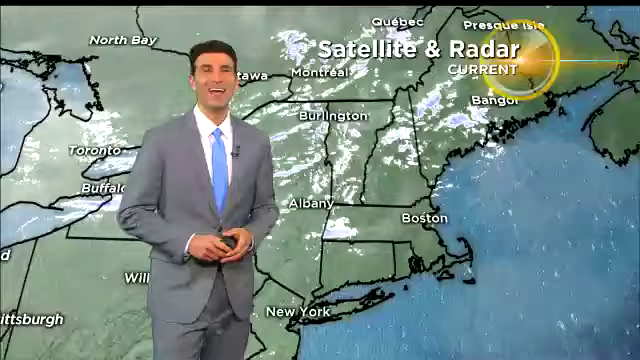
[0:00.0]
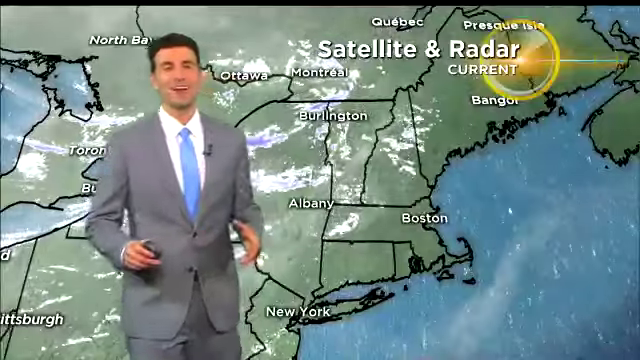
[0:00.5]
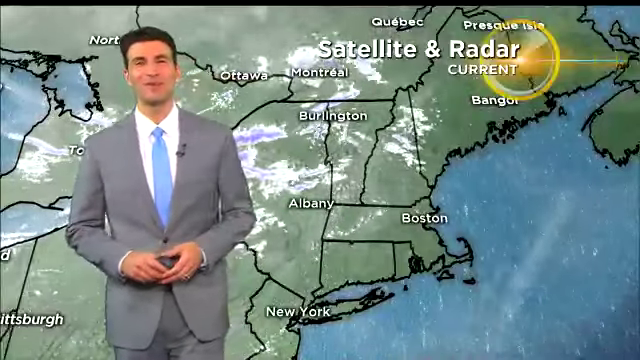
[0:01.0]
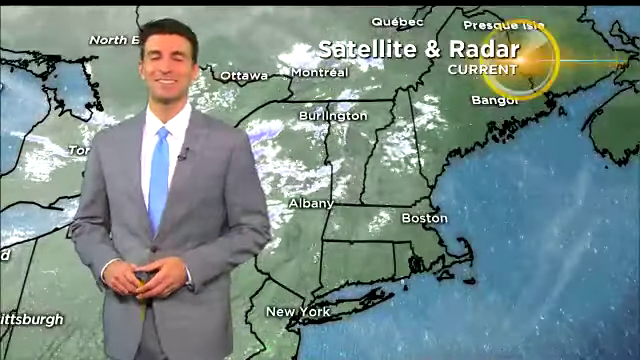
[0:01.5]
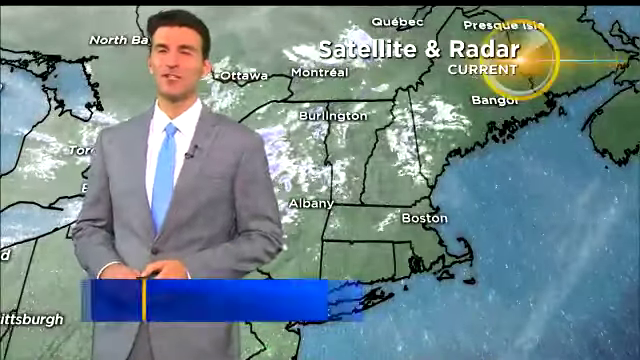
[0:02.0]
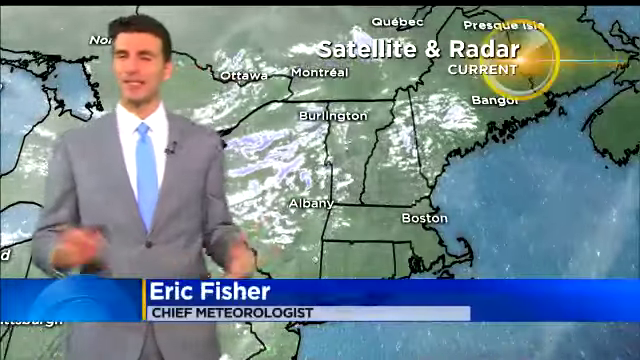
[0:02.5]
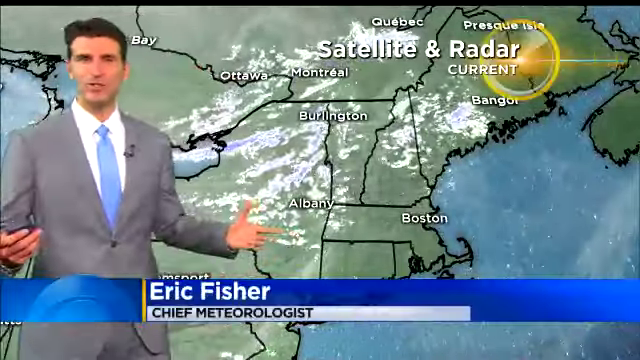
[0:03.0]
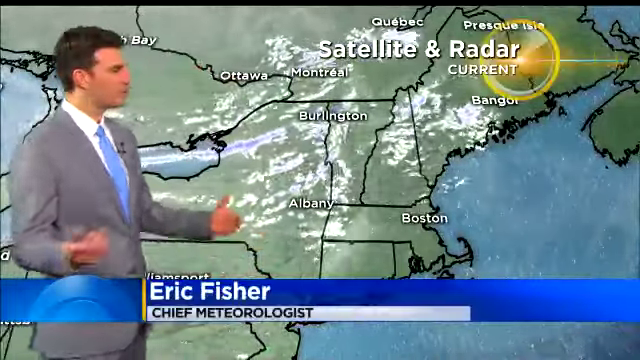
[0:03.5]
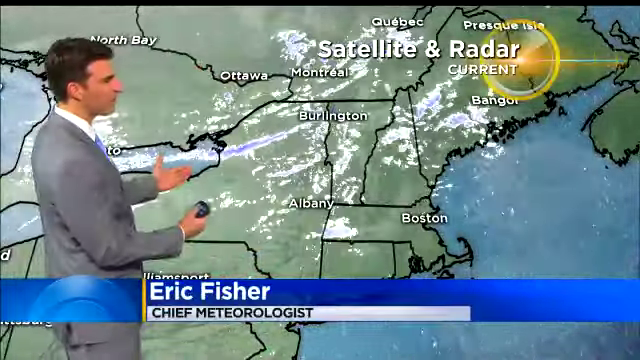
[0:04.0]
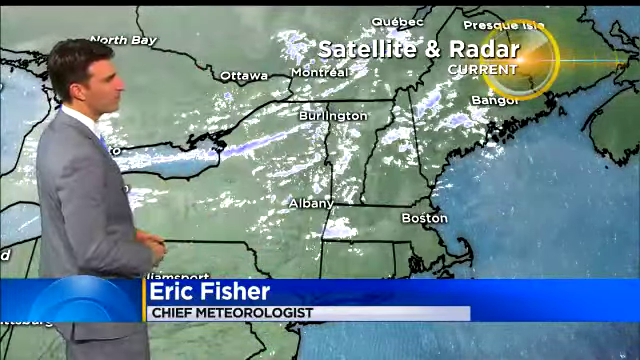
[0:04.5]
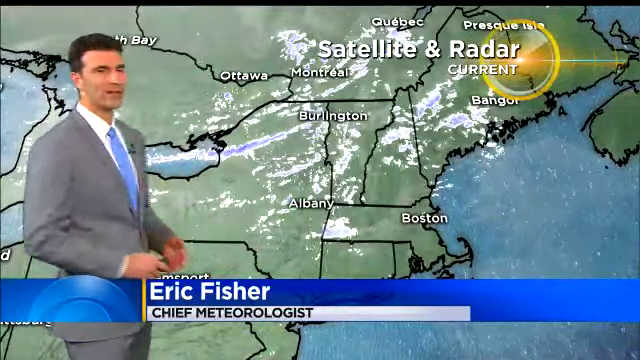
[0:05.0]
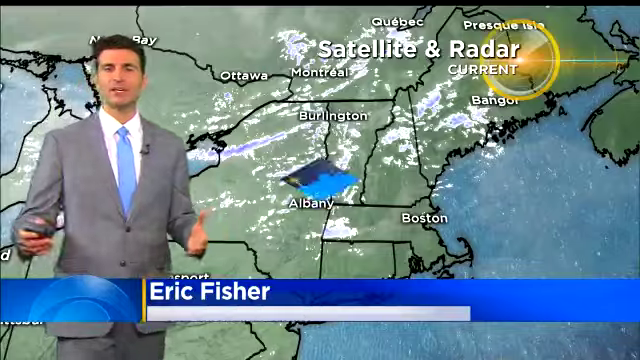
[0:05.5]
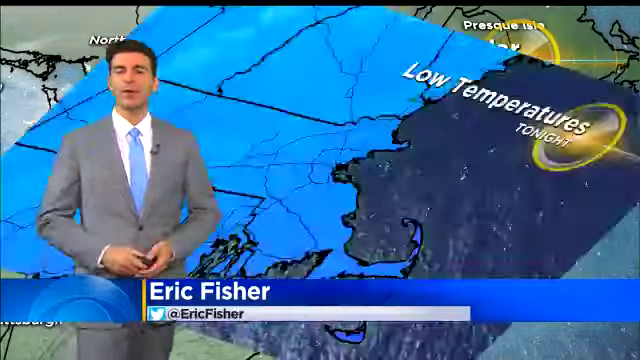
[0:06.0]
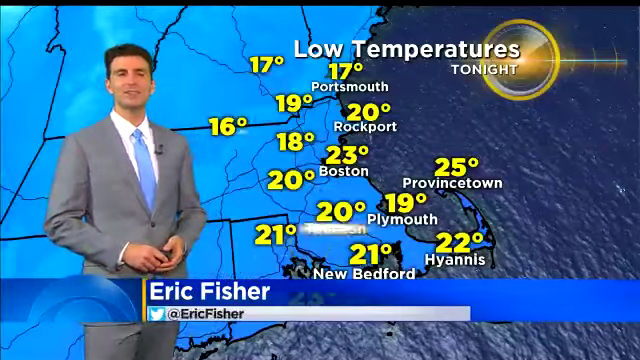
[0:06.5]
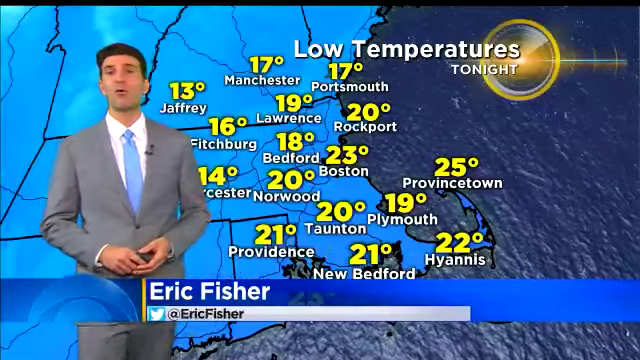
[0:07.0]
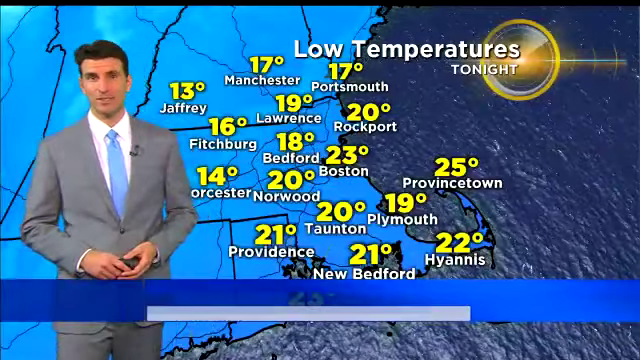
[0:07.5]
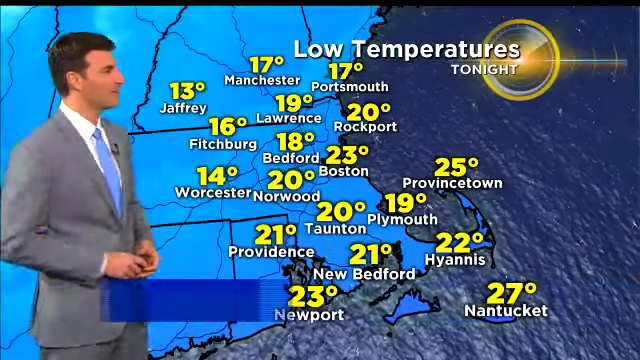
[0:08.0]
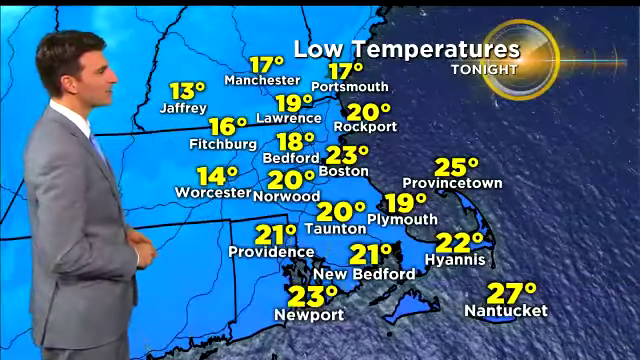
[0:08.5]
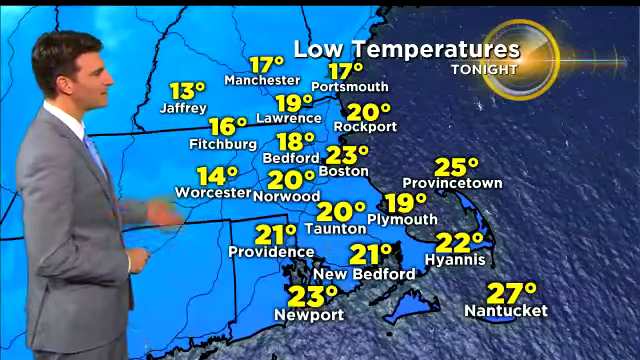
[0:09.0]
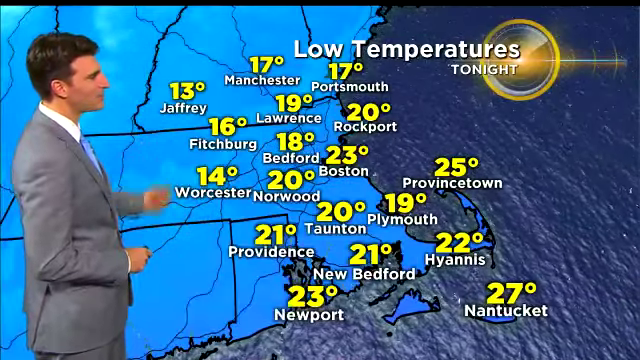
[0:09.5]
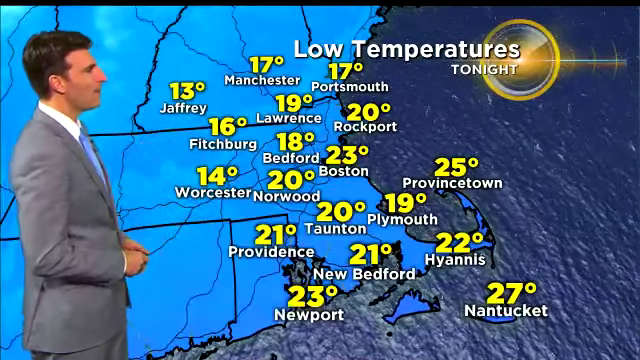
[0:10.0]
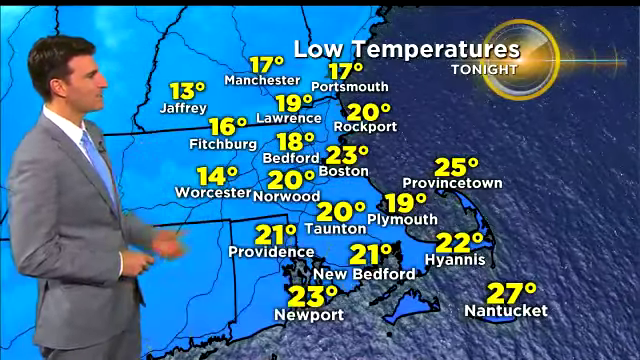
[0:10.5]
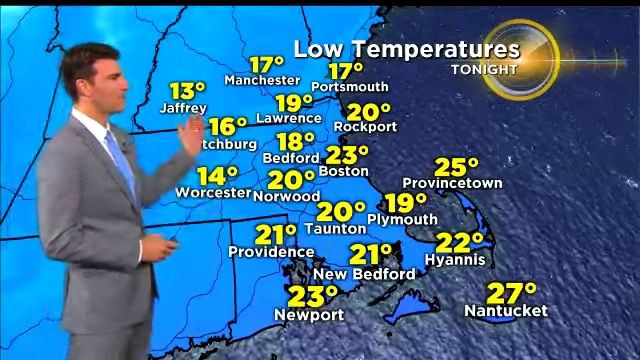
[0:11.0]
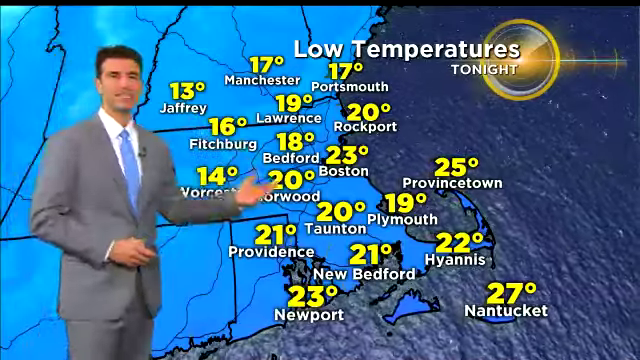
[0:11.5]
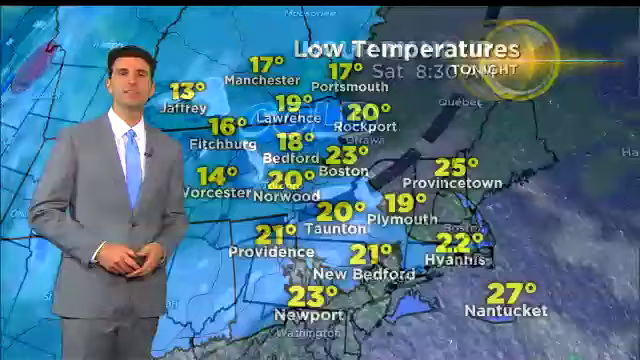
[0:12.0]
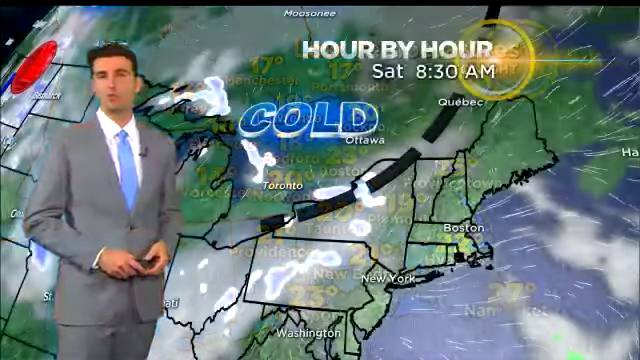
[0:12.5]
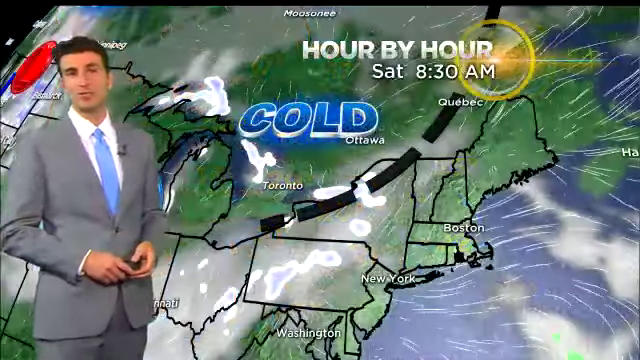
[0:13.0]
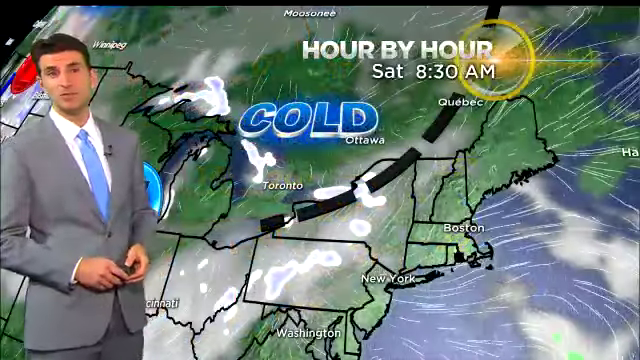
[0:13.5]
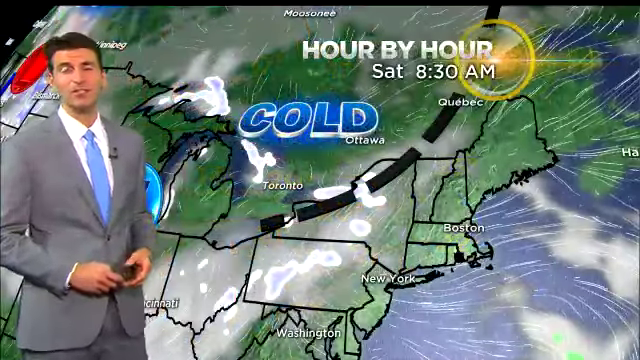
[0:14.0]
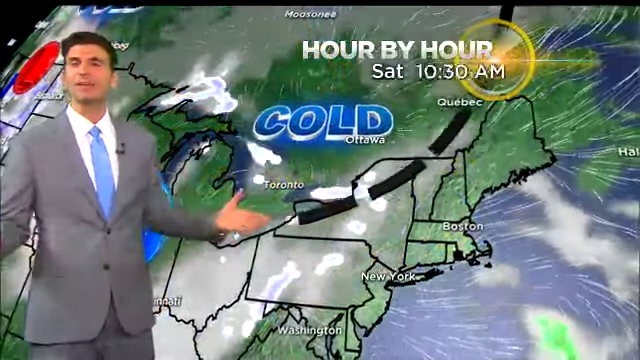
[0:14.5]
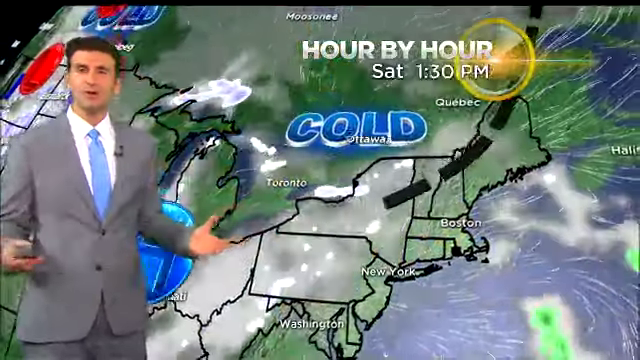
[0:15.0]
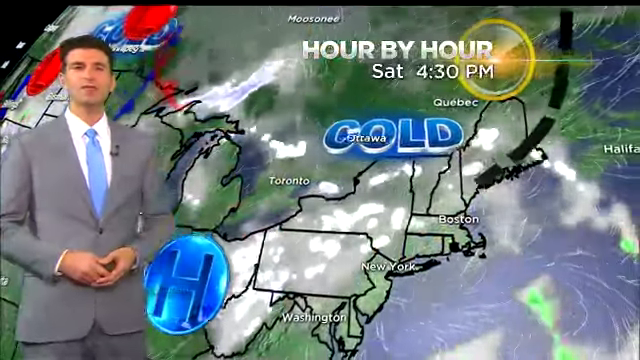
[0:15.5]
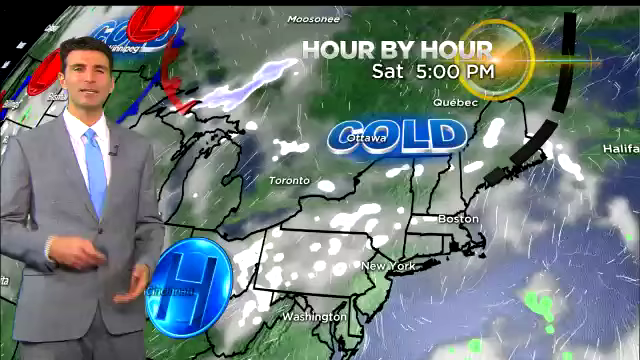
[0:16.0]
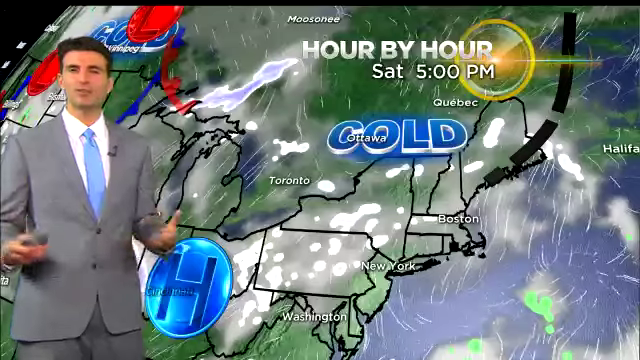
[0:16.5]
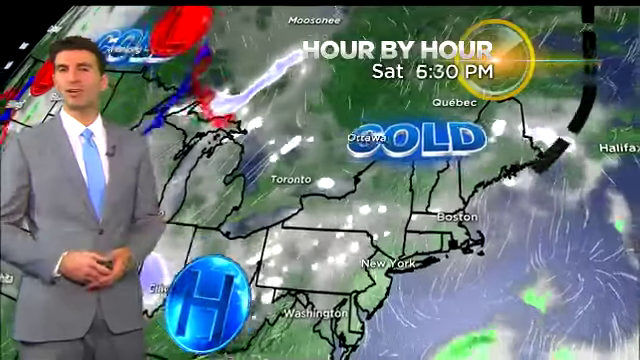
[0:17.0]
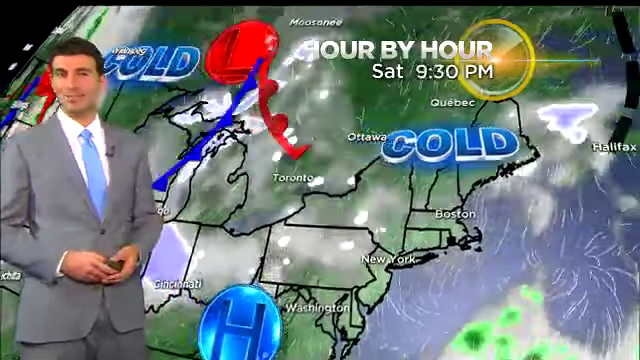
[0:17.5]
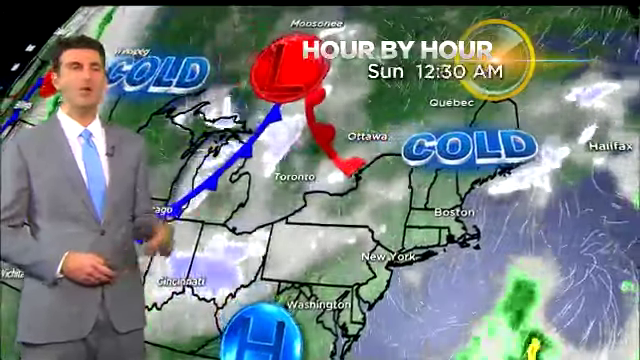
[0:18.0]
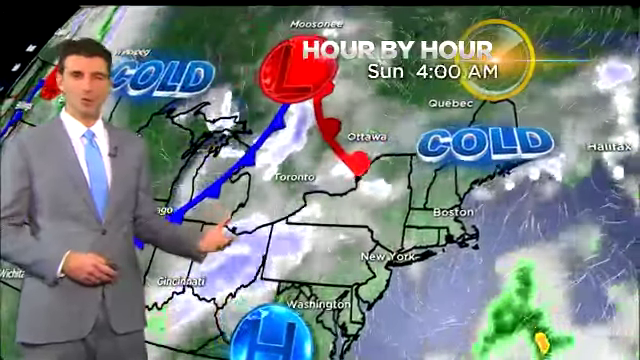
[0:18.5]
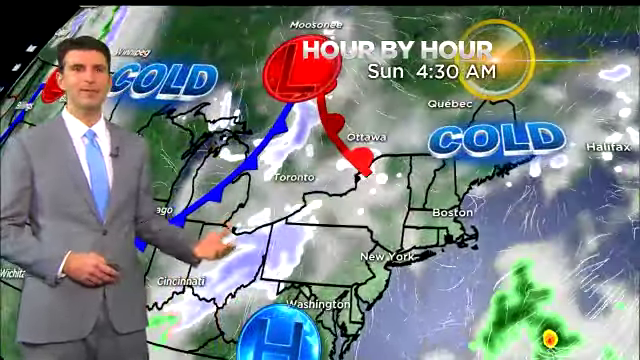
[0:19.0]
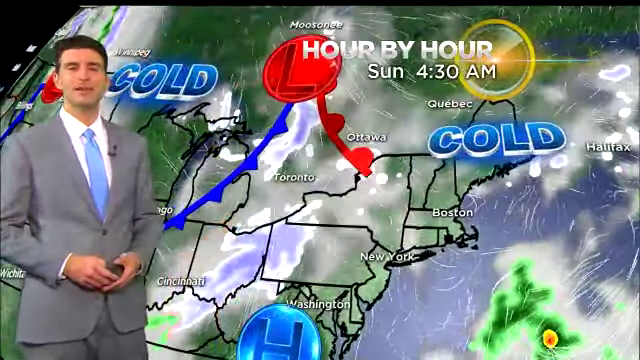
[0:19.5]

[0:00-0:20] A TV weather presenter, identified as Eric Fisher, chief meteorologist, presents the weather. A map shows low temperatures for tonight, with a temperature attached to each place: Manchester, Portsmouth, Geoffrey, Lawrence, Rockport, Norwood, Taunton, Providence, Plymouth, Provincetown and Boston. He then moves on to another view showing how cold these places are going to be.